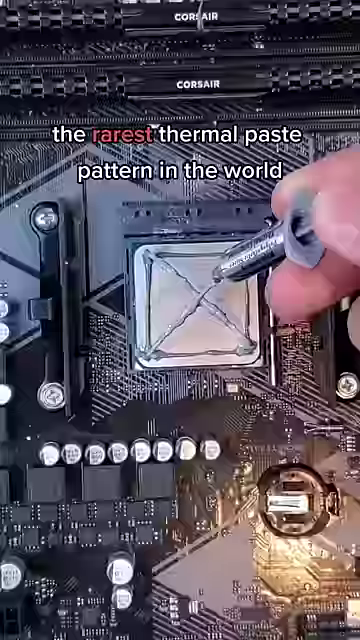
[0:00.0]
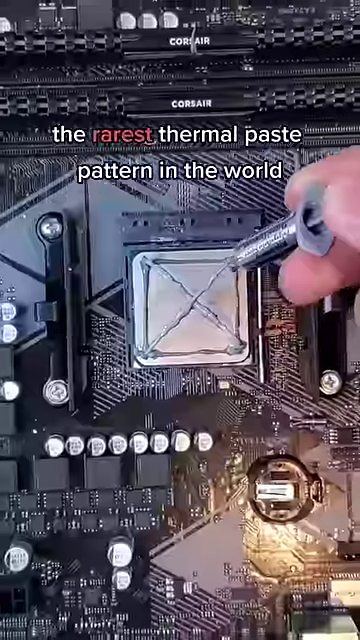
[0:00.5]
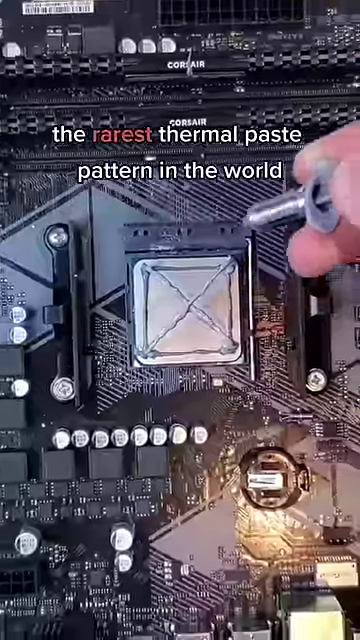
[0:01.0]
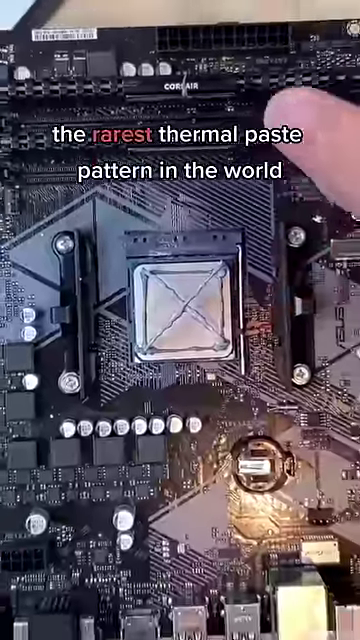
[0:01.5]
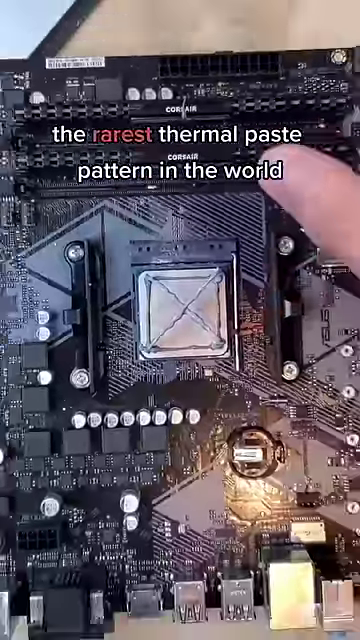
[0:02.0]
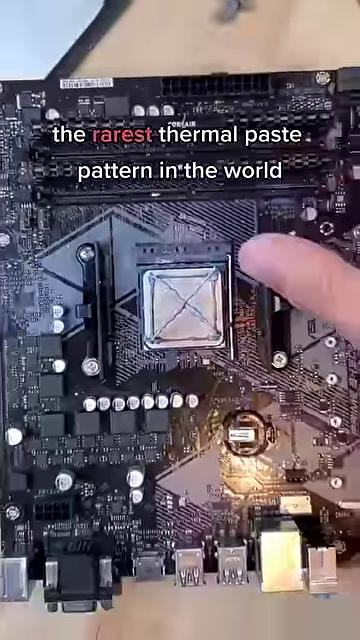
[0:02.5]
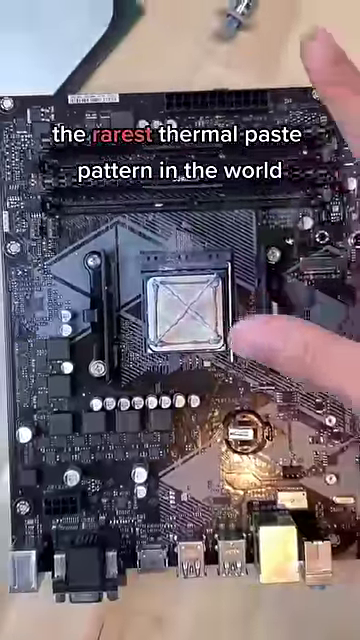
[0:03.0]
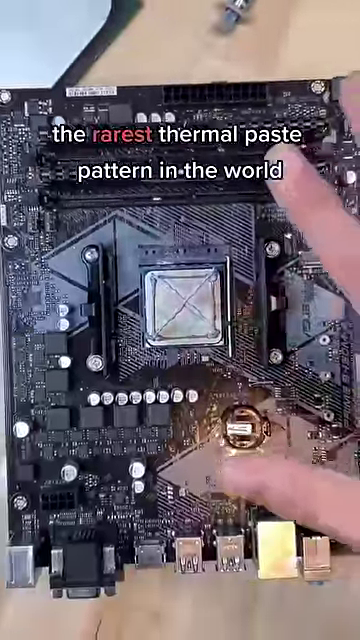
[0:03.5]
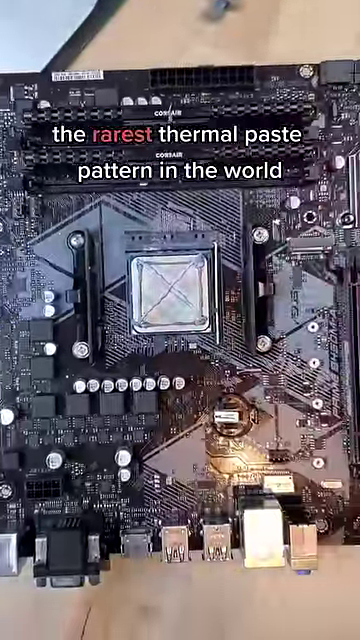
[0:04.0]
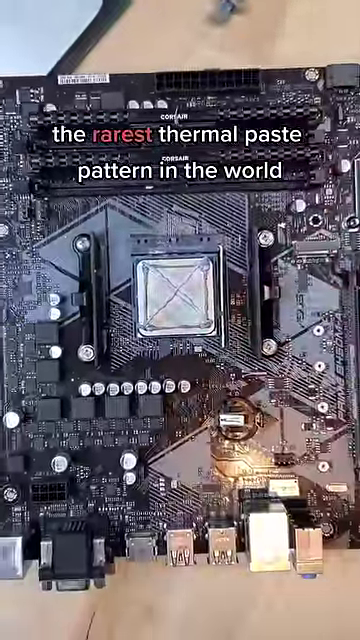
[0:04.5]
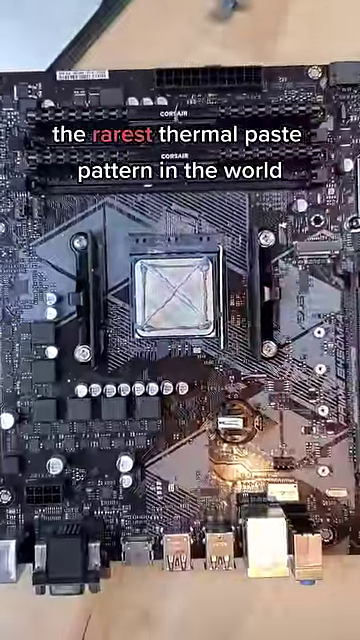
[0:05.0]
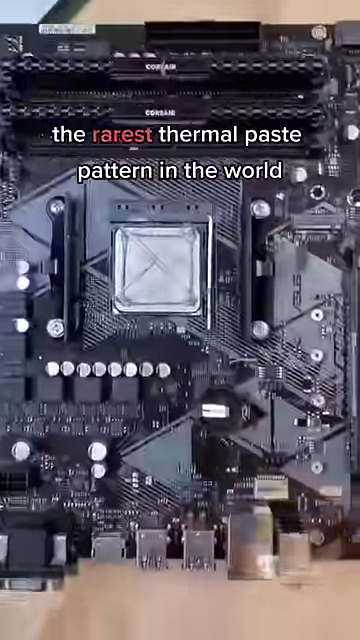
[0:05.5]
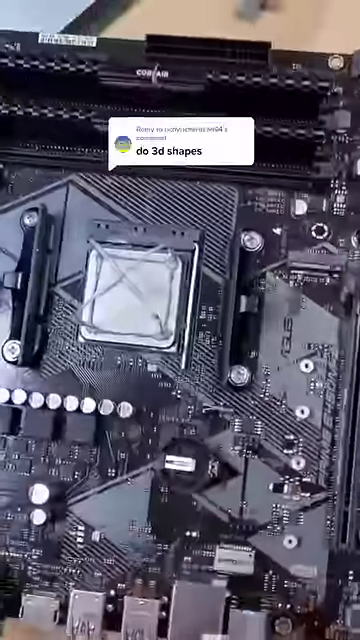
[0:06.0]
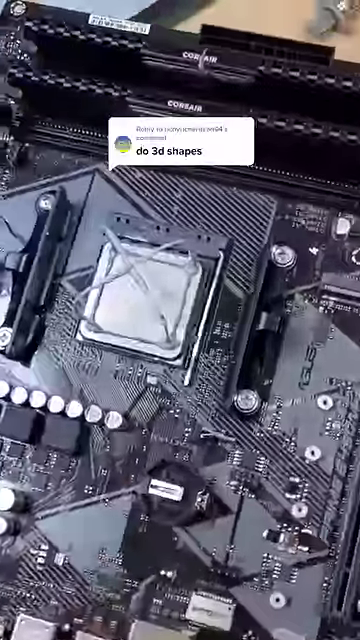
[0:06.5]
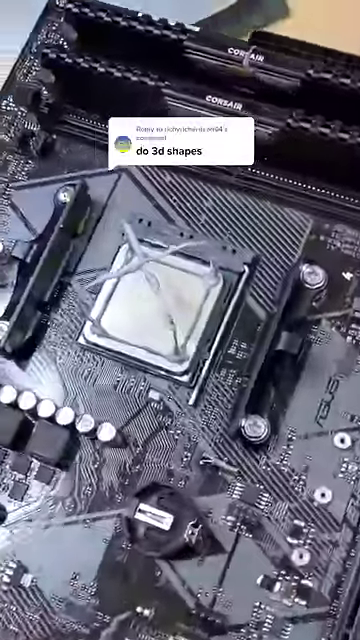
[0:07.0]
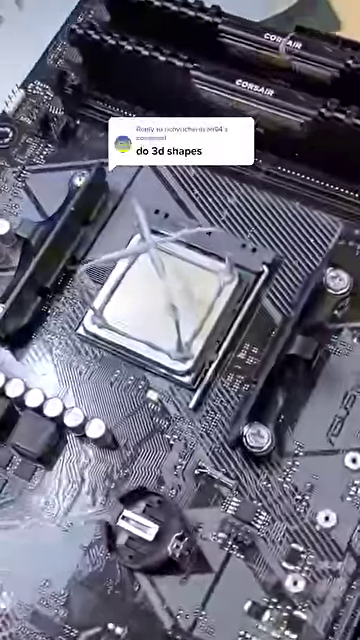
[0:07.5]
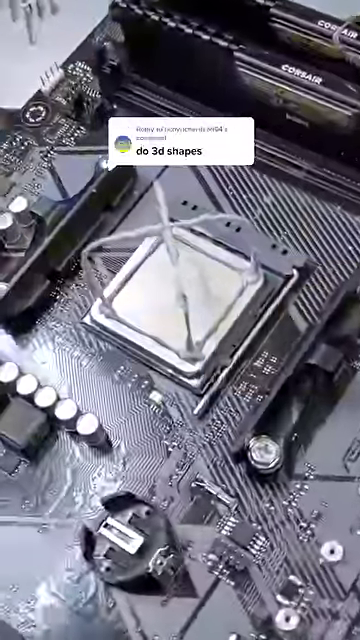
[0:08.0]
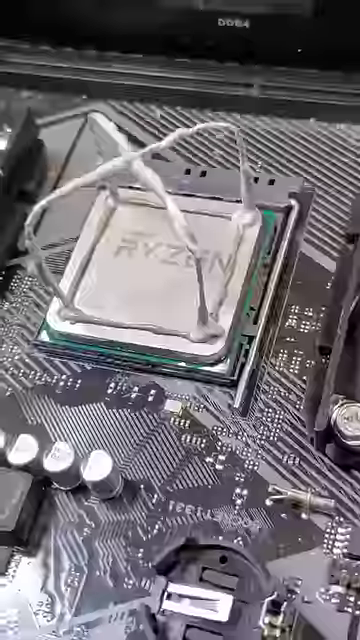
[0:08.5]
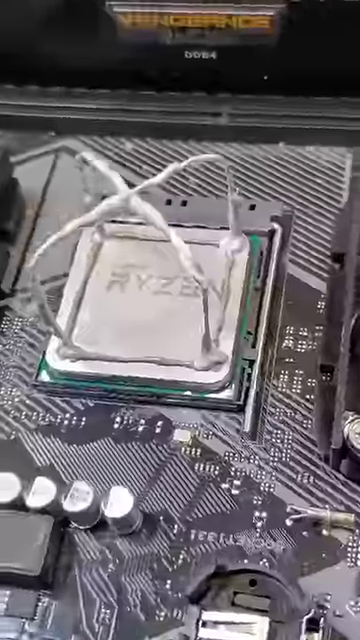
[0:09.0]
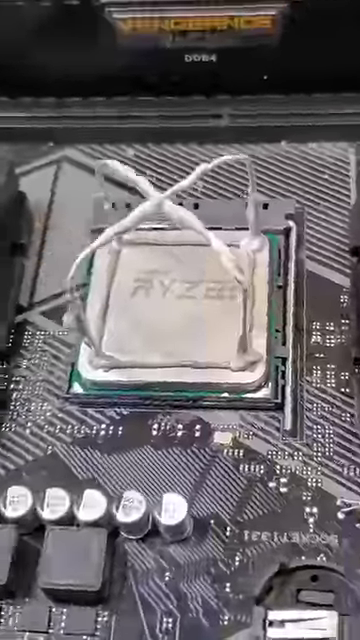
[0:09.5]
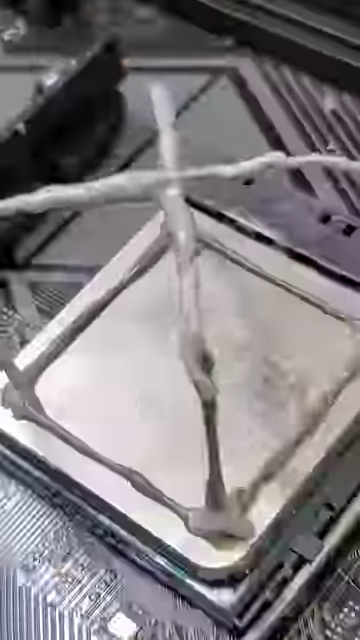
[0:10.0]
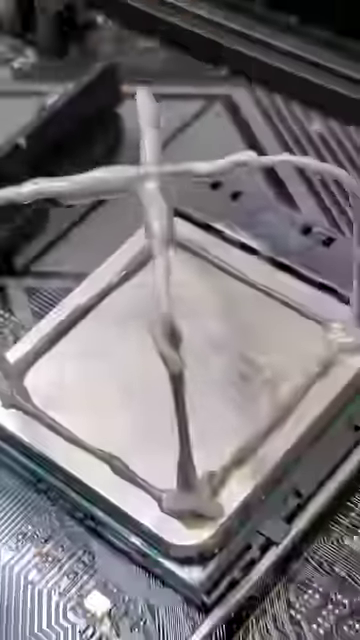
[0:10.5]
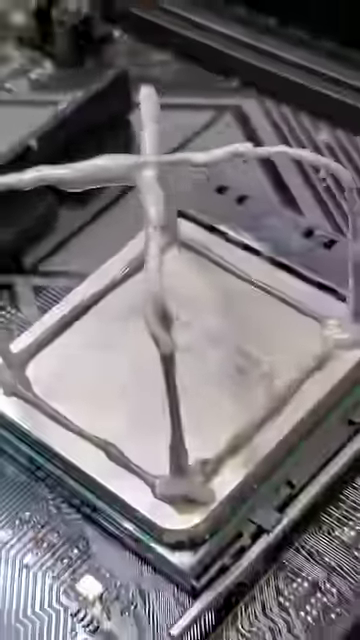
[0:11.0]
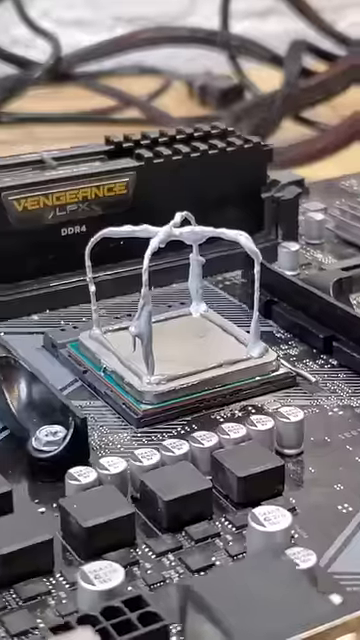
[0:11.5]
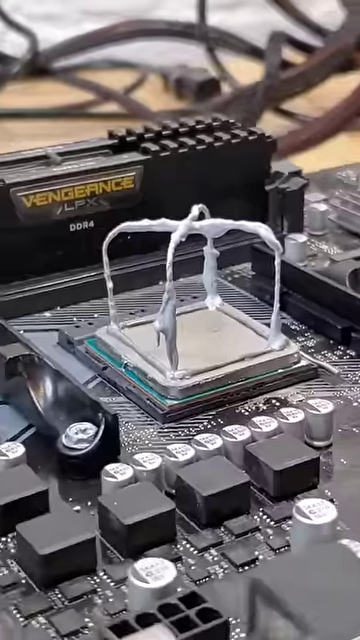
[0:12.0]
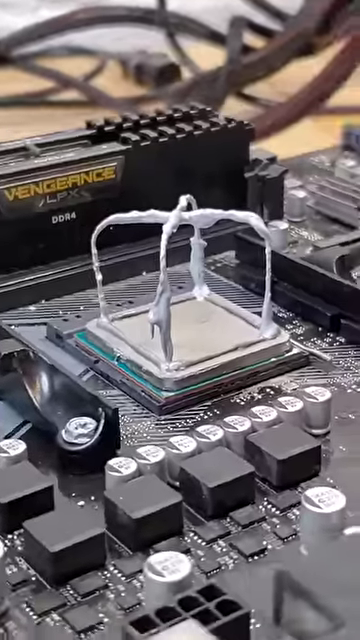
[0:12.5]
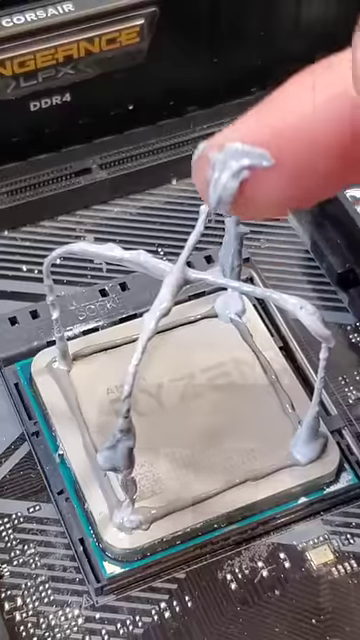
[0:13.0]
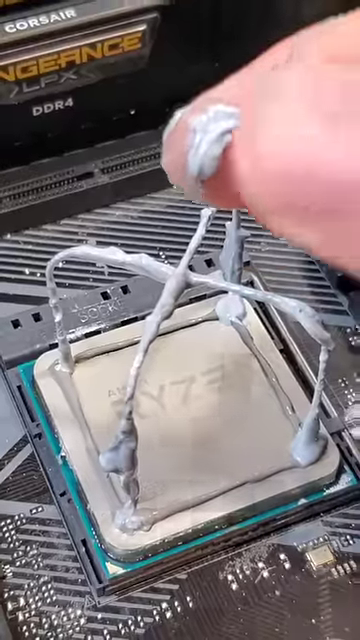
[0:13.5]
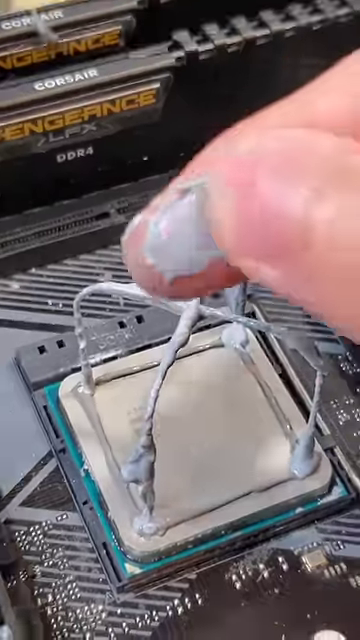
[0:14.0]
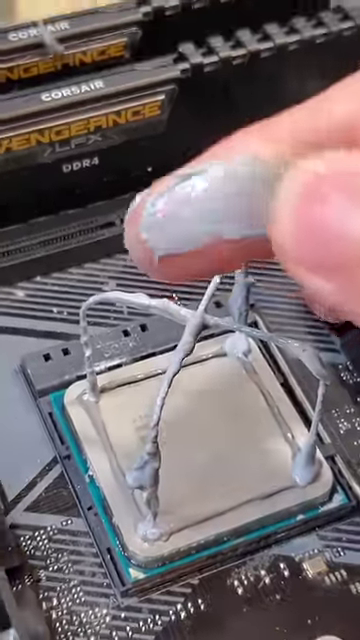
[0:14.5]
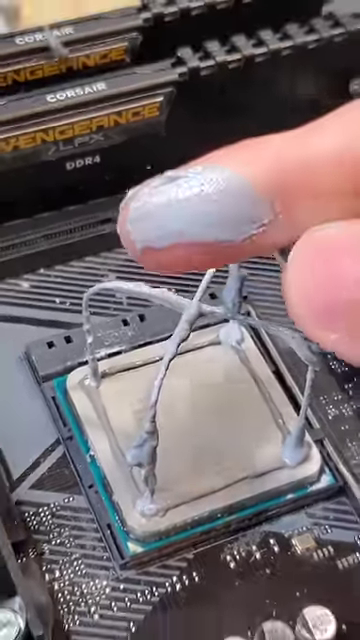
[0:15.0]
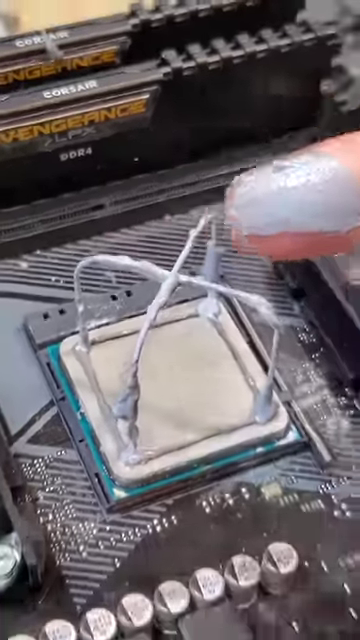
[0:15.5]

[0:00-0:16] A piece of a case rests on top of what appears to be some sort of small divider. The camera zooms in and out, and a man's hand moves back and forth. Tiny metal pieces surround the piece, and the scene looks like the inside of an iPhone. A white paste is on top of a square object, and the parts are very small. It appears to be the inside of some electrical device.